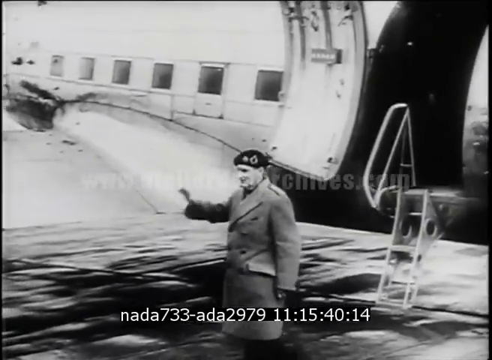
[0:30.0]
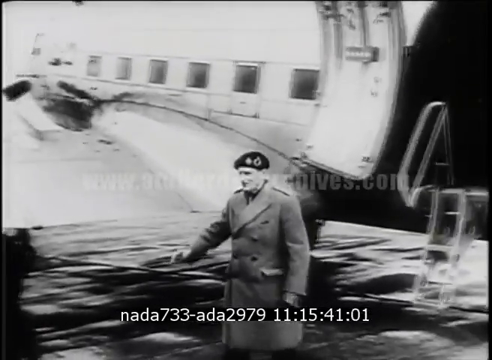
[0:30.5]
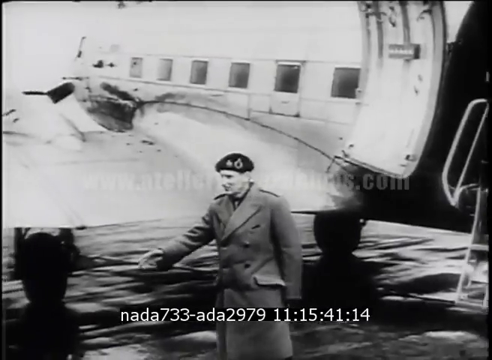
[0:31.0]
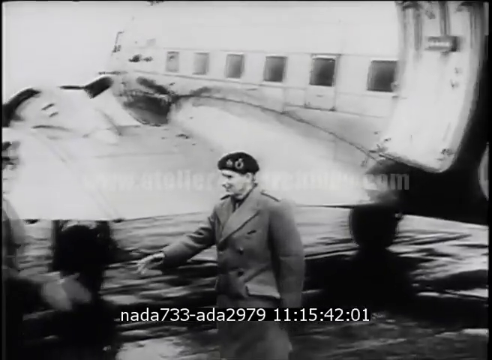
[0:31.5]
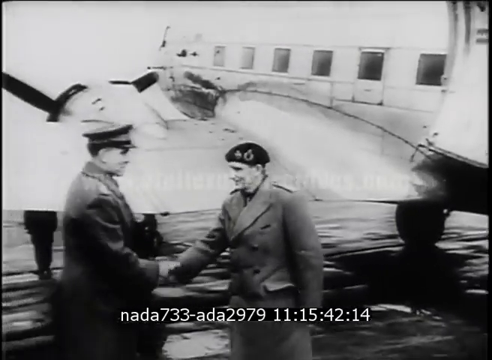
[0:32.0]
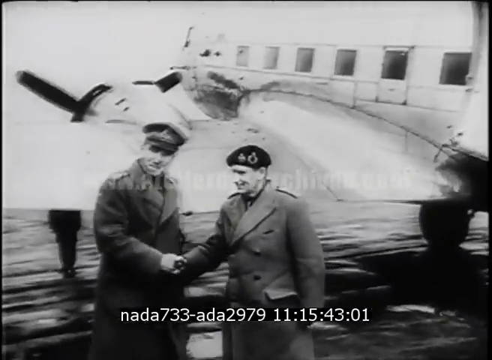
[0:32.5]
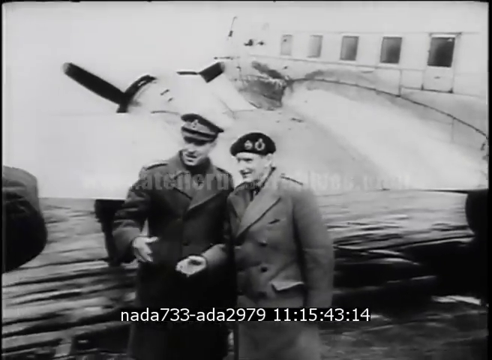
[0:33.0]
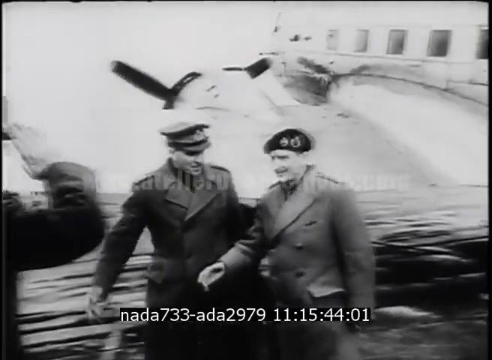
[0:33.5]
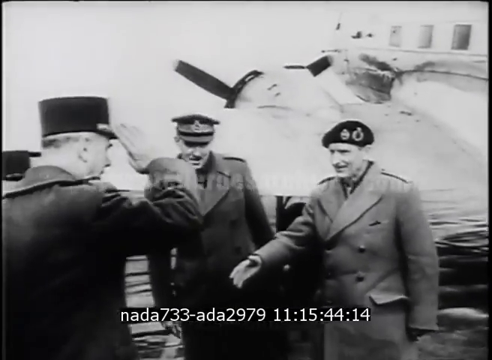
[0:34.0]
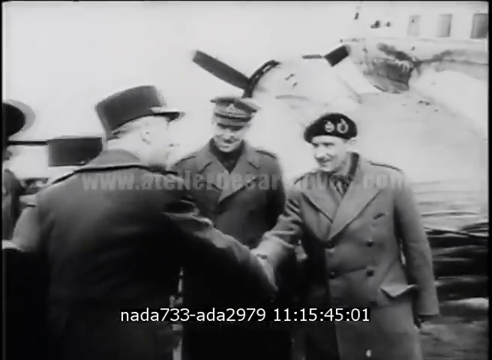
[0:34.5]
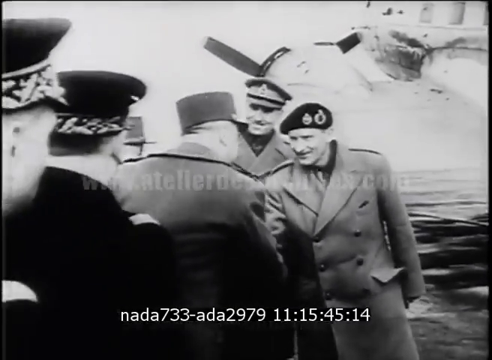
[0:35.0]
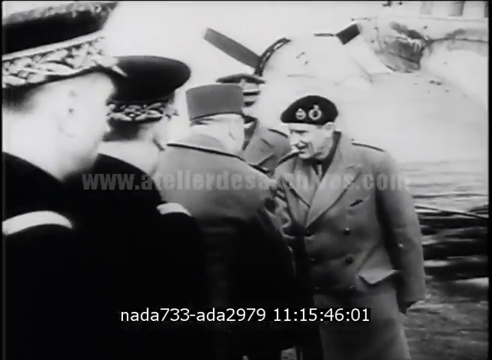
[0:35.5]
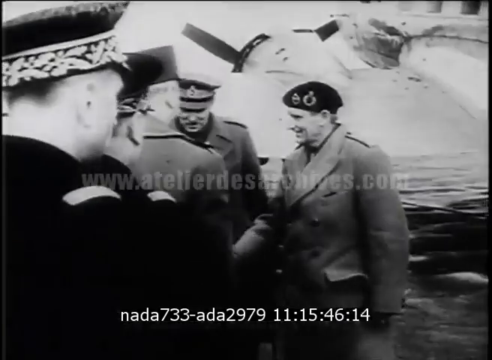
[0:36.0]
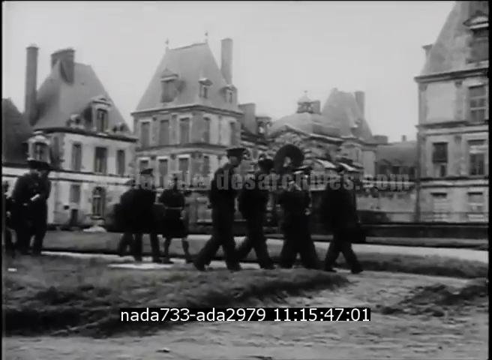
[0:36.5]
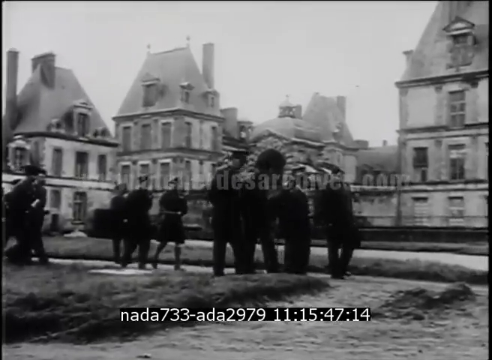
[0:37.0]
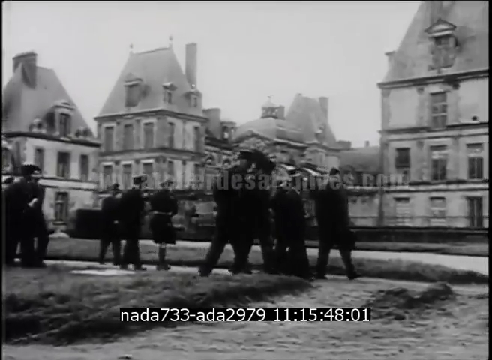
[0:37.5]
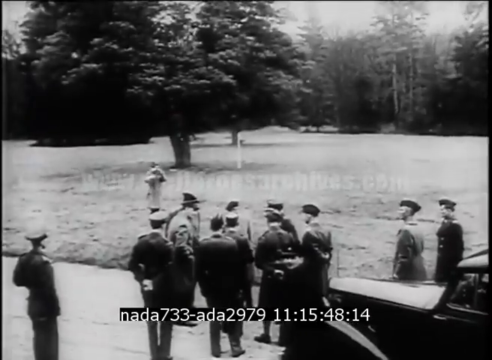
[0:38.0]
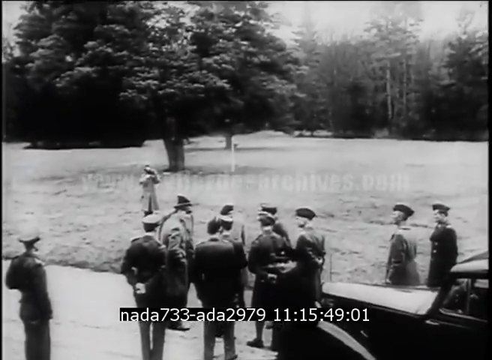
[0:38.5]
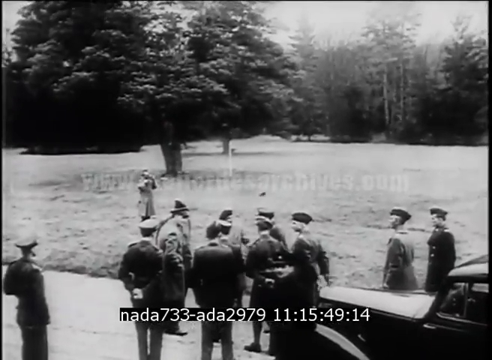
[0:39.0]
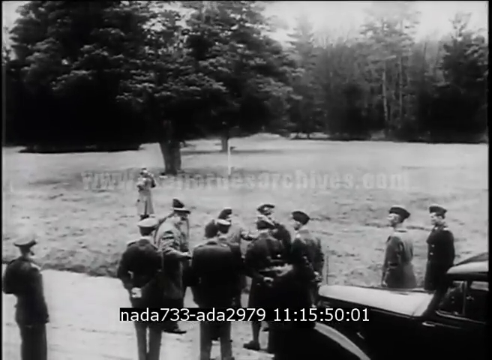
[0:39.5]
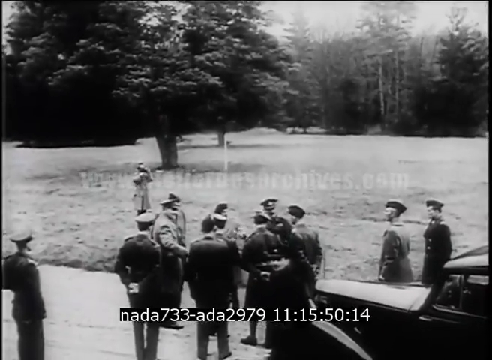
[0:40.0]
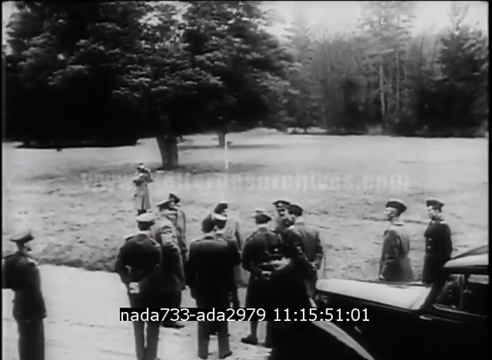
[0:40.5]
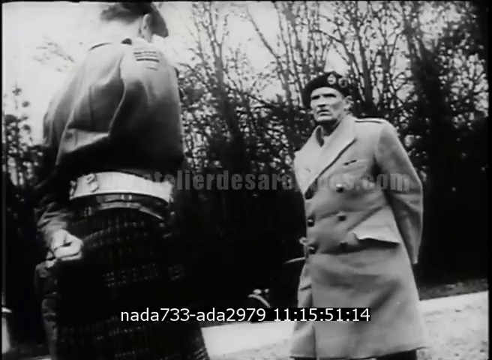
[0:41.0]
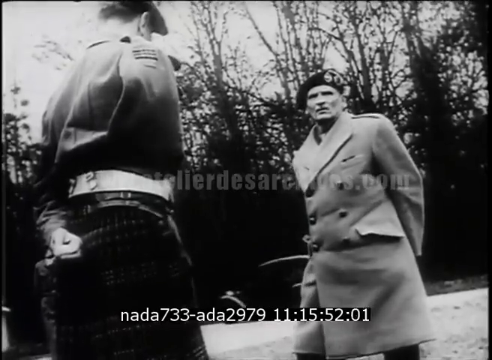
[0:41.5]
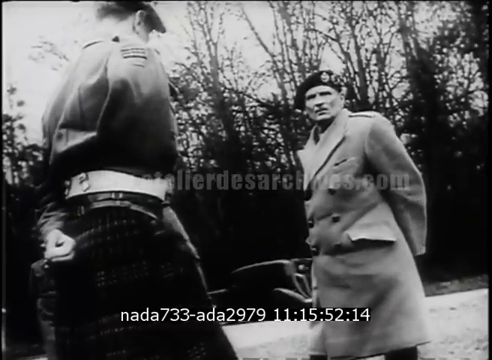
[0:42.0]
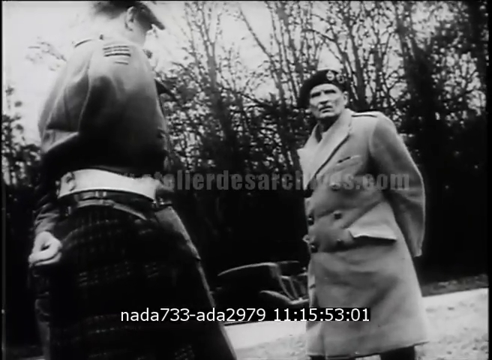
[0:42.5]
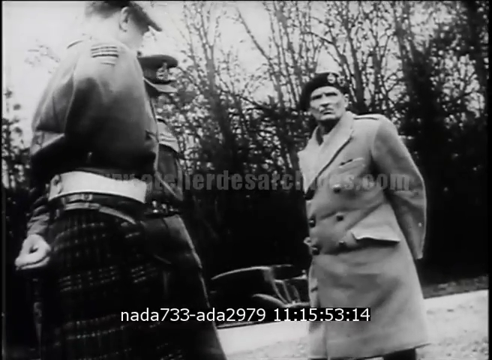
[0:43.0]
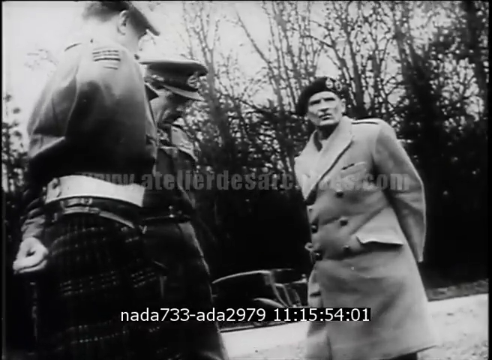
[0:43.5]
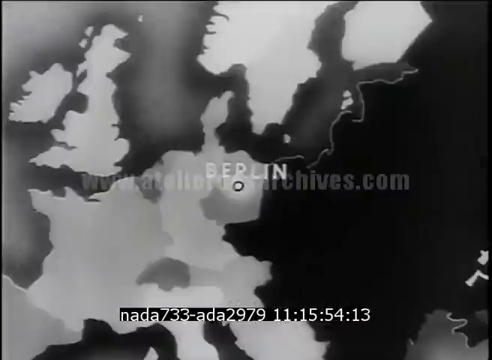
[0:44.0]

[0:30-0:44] A man steps out of the plane and shakes hands with some other men. All of the men wear hats and appear to be on some type of official business. The man coming off the plane salutes, and another man shakes his hand and introduces him to another man, who salutes and then shakes his hand. Several men then walk across a city area with several buildings in the background, some of which have smokestacks; all of the men wear black. Next, all of the men are in a large open area with trees in the background that looks like it could be some type of park. Finally, a map shows the word "Berlin".